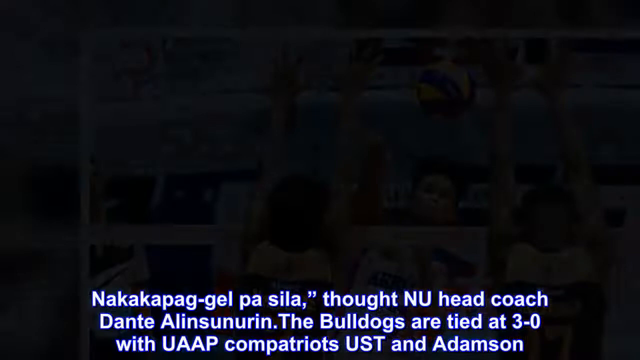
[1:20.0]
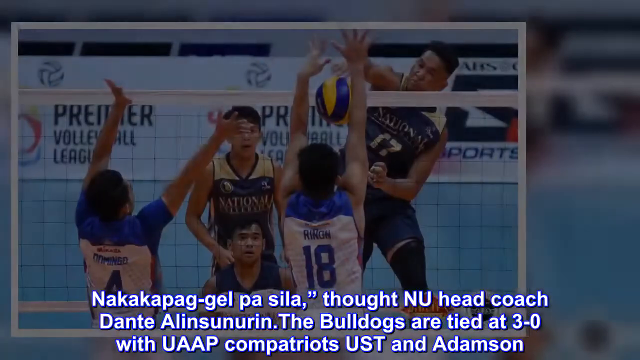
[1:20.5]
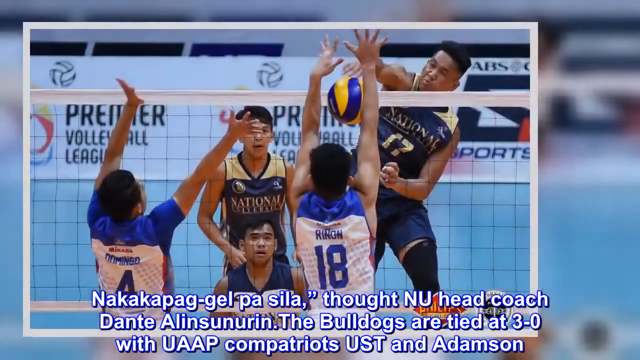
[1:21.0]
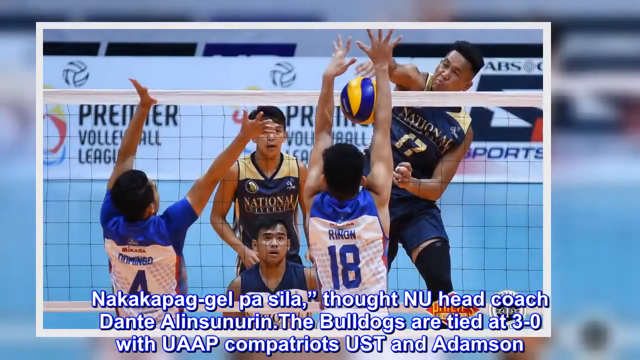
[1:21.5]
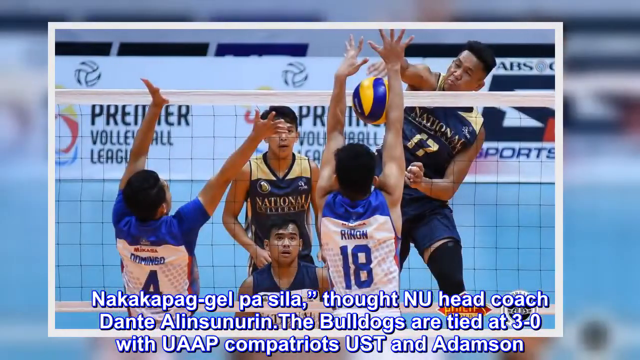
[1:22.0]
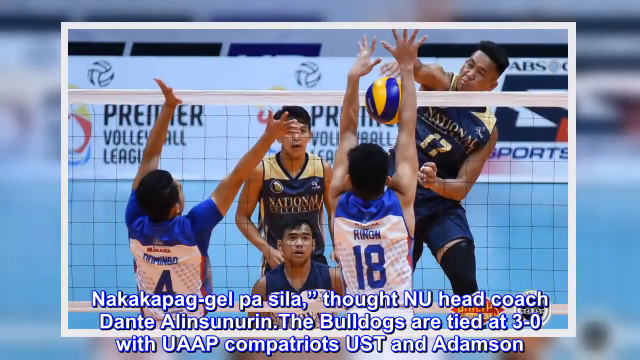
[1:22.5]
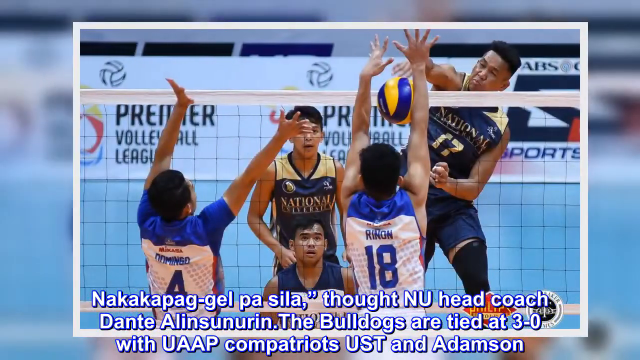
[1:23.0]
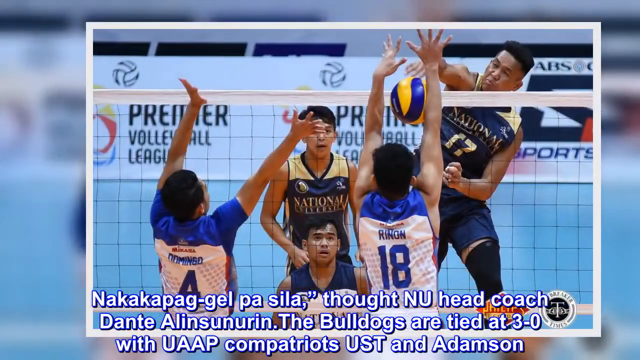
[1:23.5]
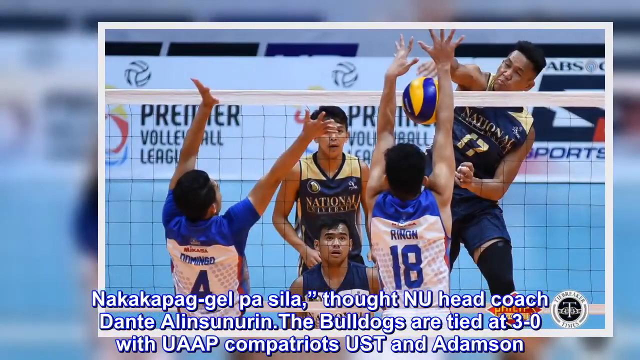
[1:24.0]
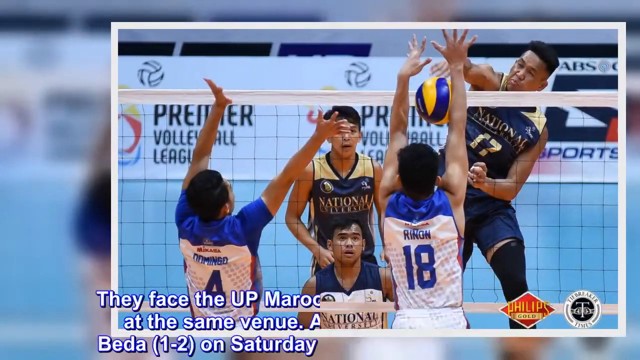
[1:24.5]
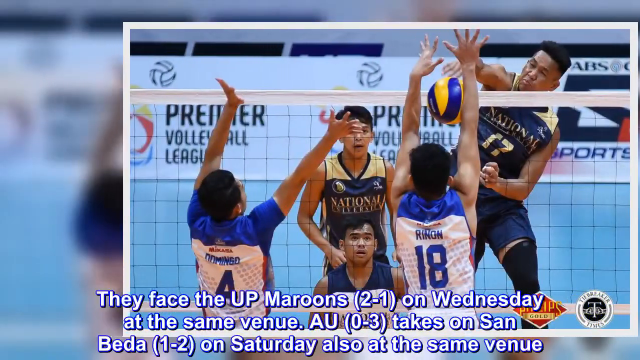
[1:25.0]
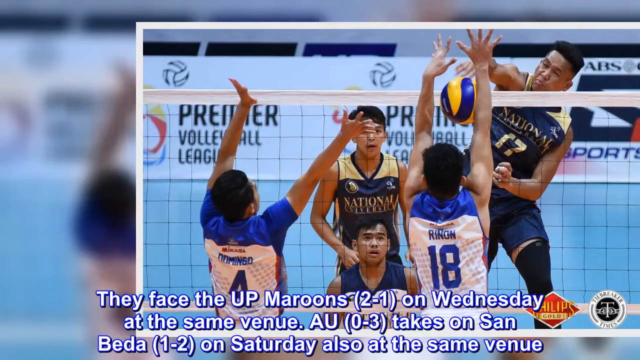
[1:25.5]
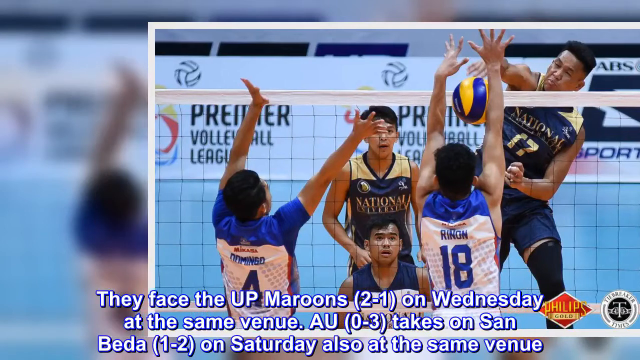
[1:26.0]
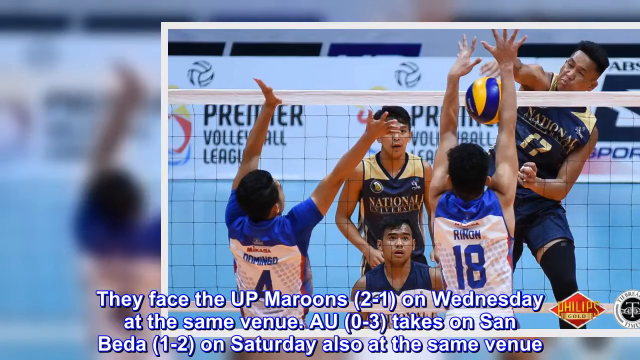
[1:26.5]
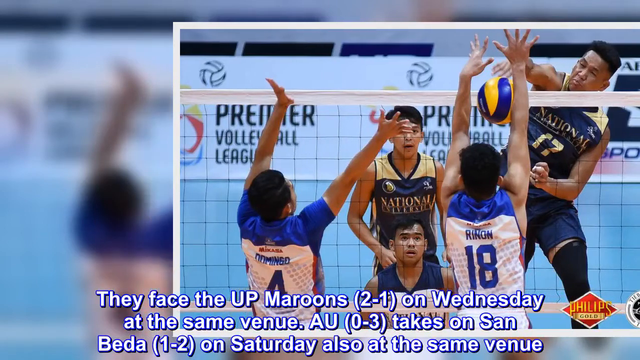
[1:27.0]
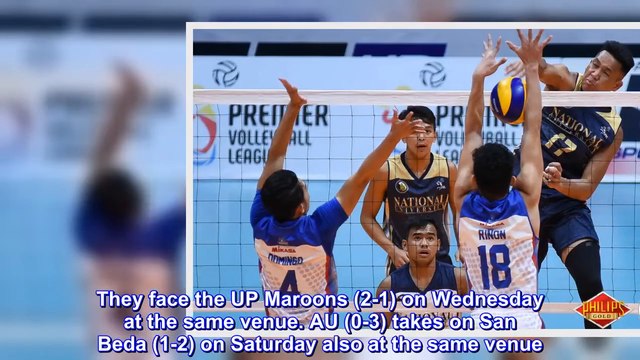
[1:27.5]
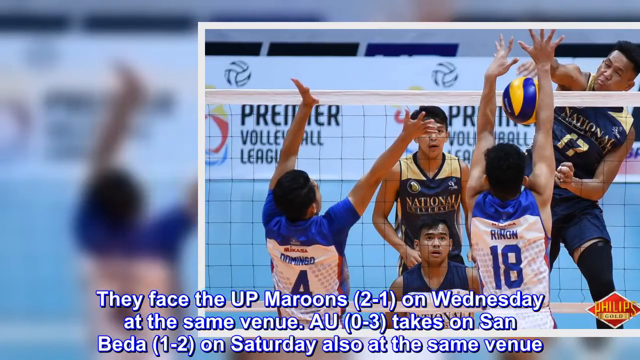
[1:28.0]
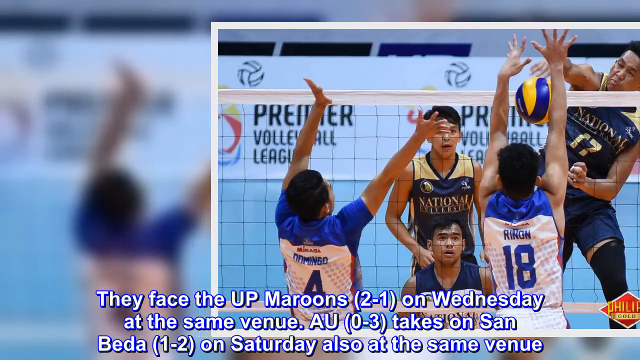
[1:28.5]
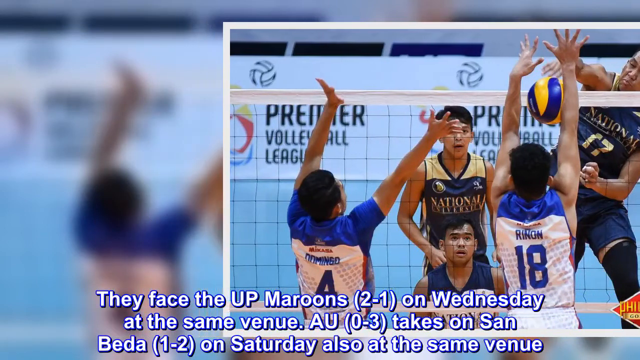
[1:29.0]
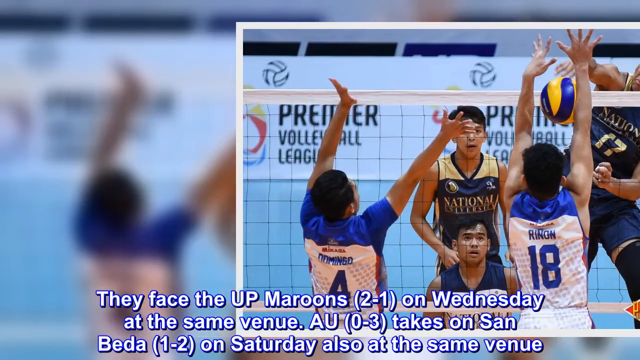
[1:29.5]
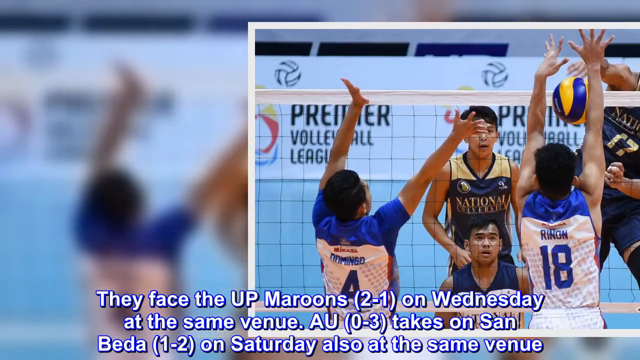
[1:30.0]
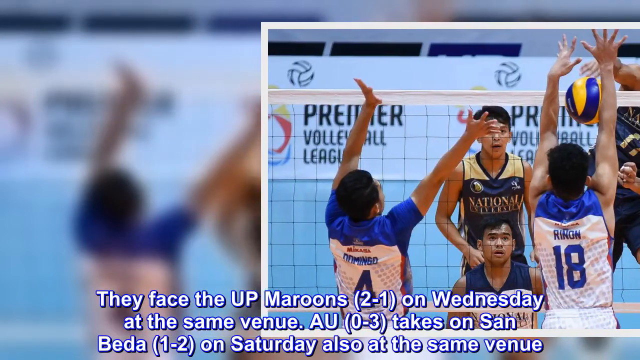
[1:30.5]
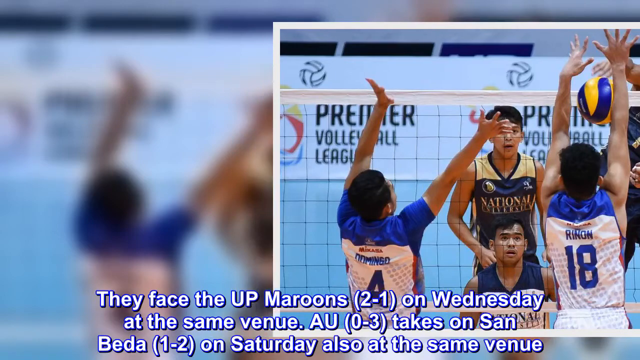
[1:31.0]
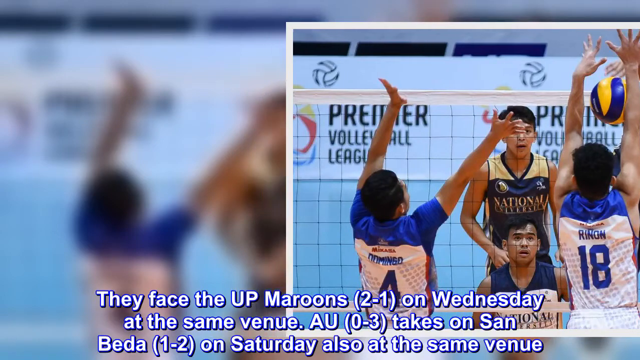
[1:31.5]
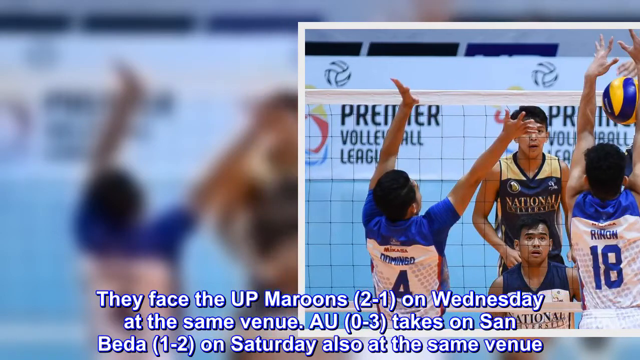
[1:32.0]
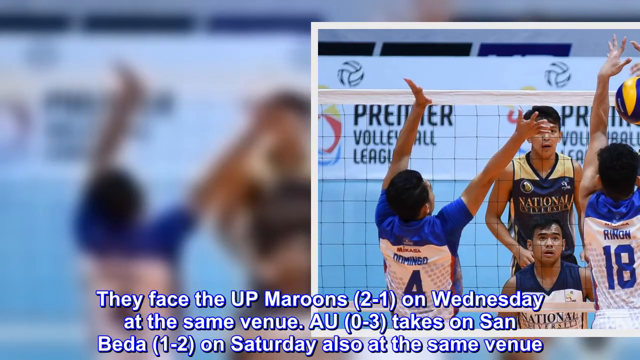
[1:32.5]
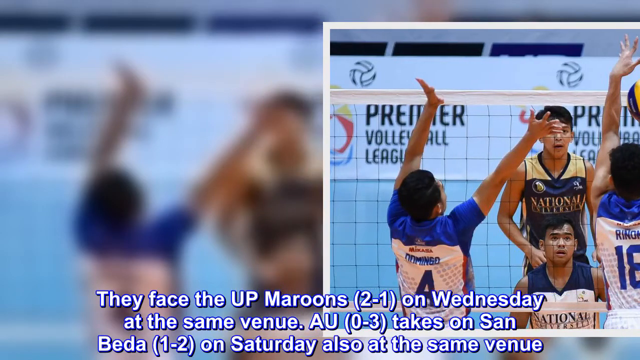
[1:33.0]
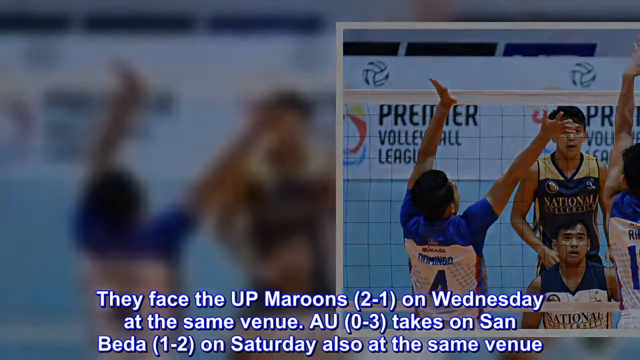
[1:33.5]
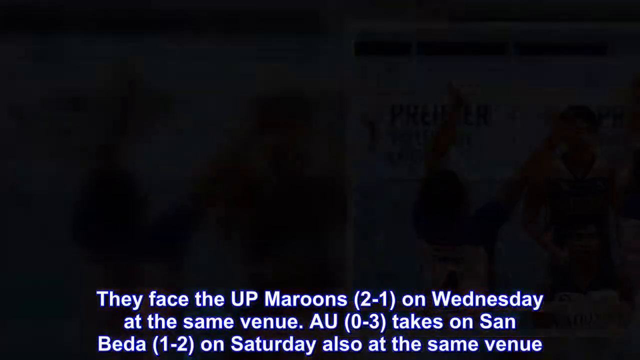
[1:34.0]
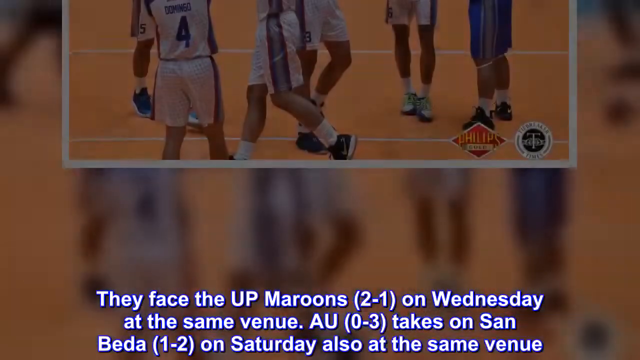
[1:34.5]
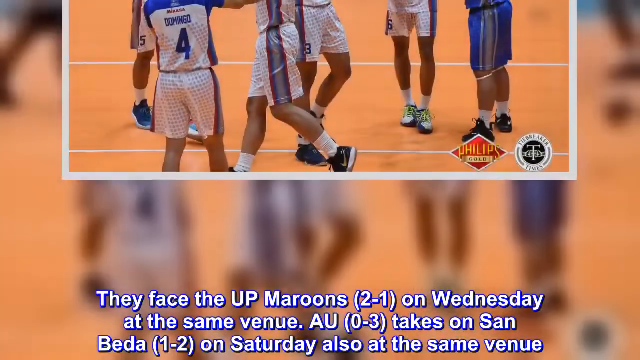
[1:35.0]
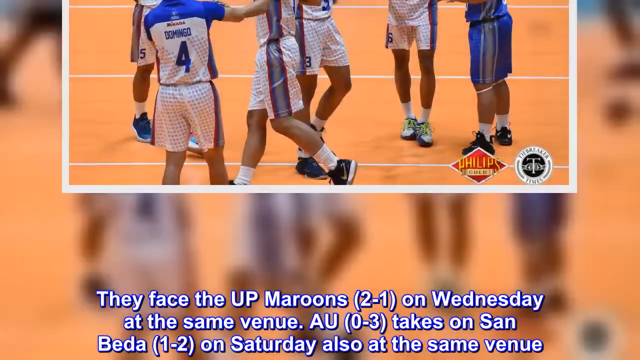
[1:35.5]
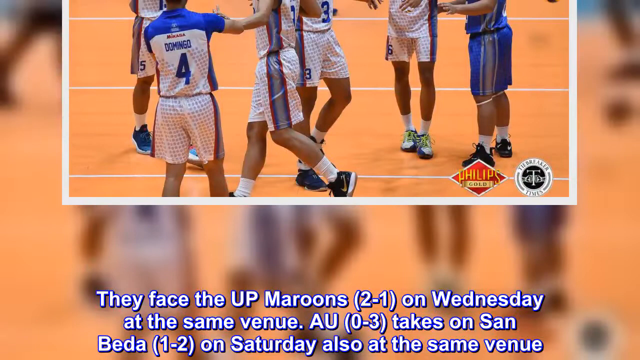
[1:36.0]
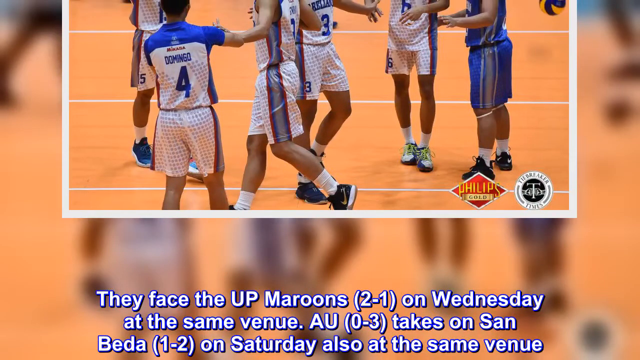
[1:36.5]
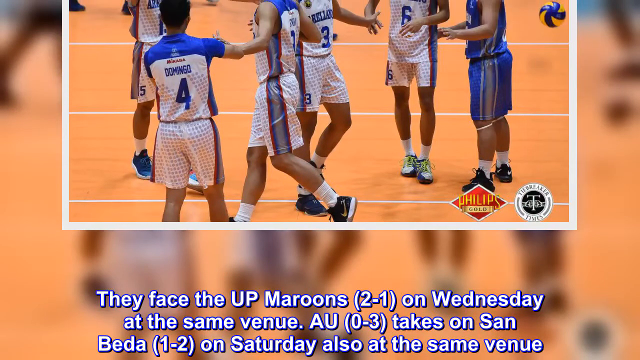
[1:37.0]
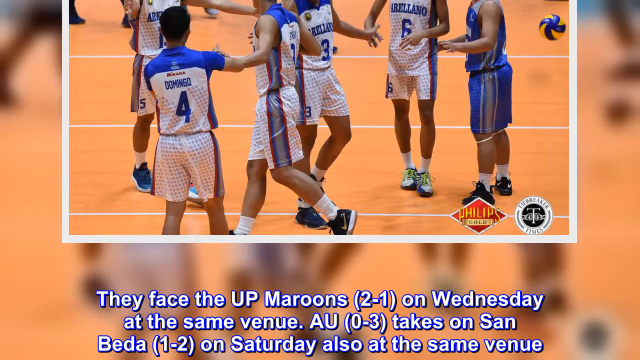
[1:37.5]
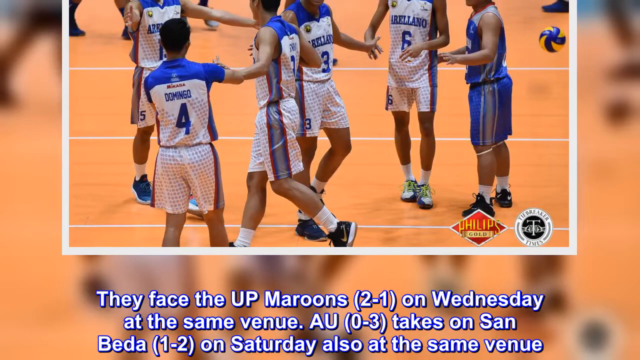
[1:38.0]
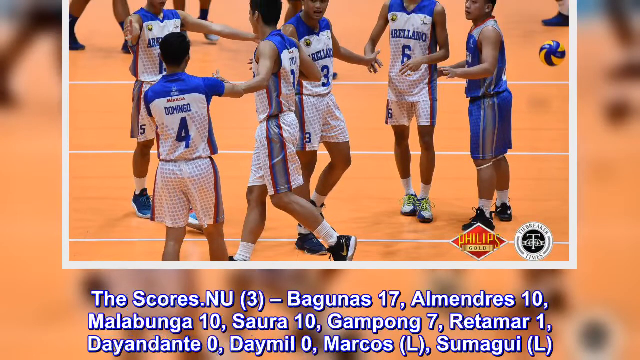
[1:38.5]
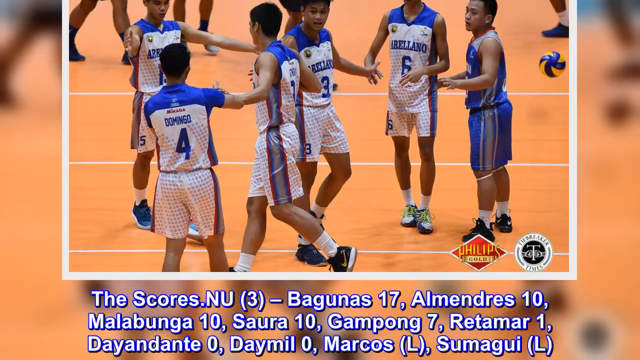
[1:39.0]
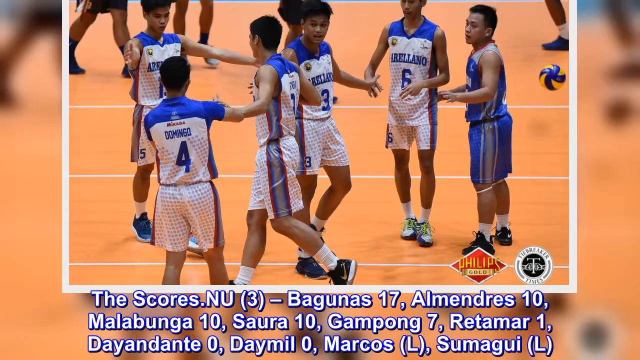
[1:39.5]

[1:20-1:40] Different still photographs from the Premier Volleyball League championship match between the National University Bulldogs and the Aureliano University Chiefs are shown. The Aureliano players are dressed in blue and white, while National University wears gold and black jerseys. Text at the bottom reads that "the Bulldogs are tied at three and three. They face the UP Maroons on Wednesday in the same venue," followed by a line that "takes on the San Bedi on Saturday at the same venue." Then the teams are shown congratulating each other after the match.